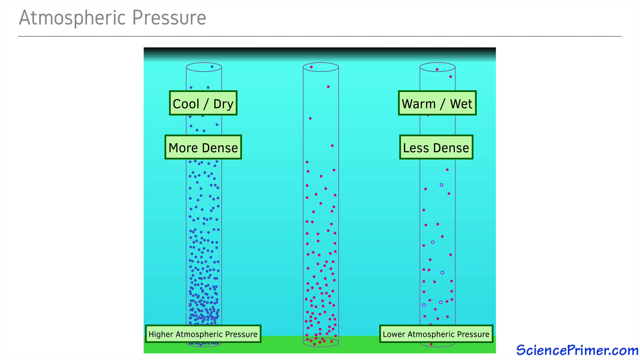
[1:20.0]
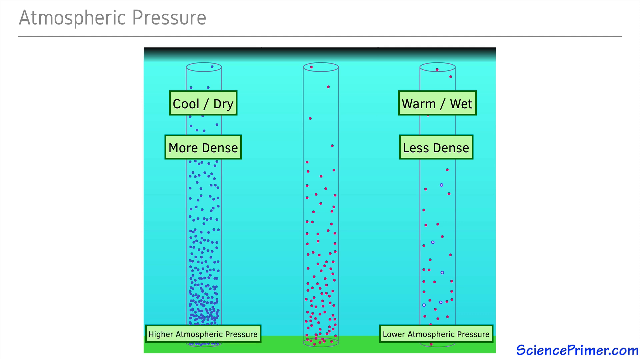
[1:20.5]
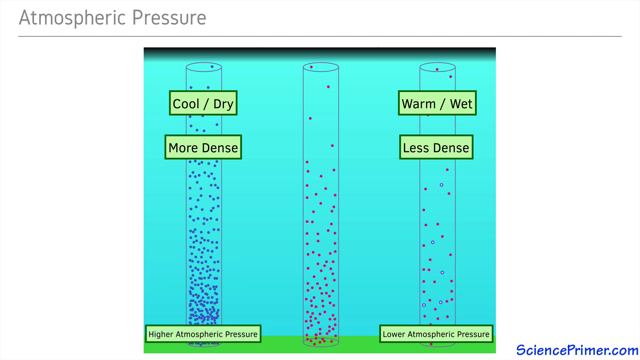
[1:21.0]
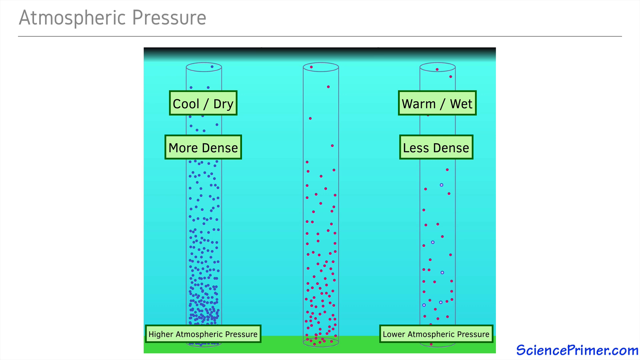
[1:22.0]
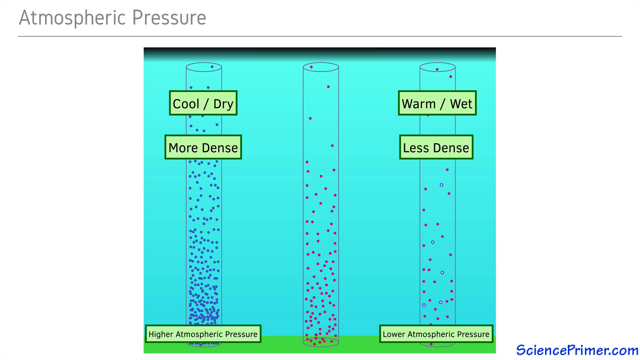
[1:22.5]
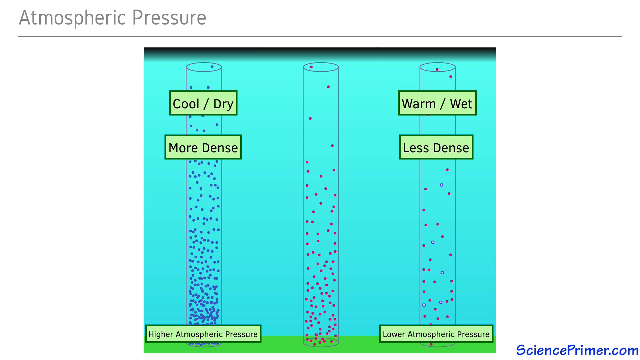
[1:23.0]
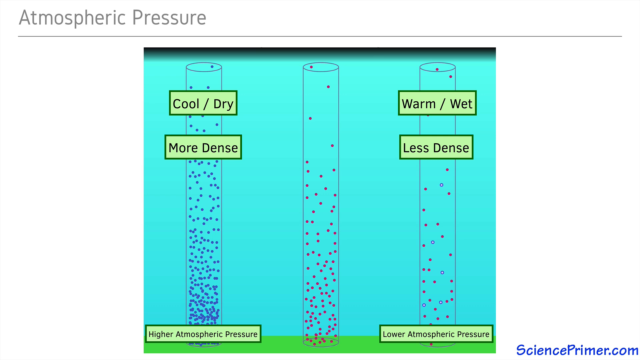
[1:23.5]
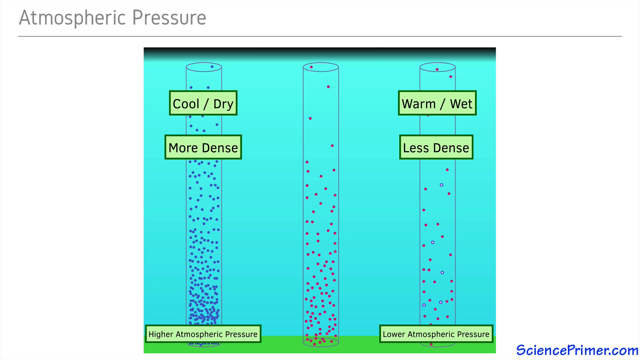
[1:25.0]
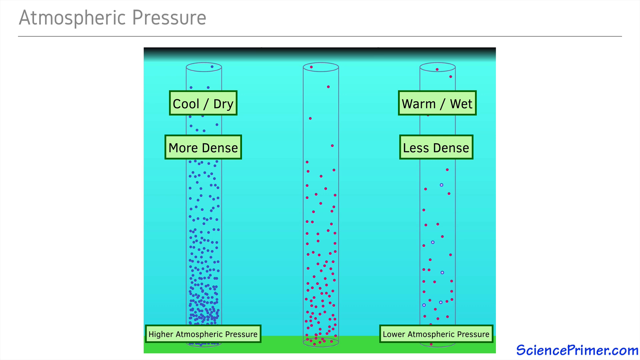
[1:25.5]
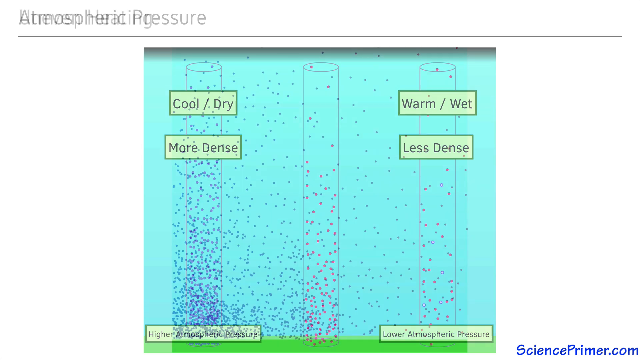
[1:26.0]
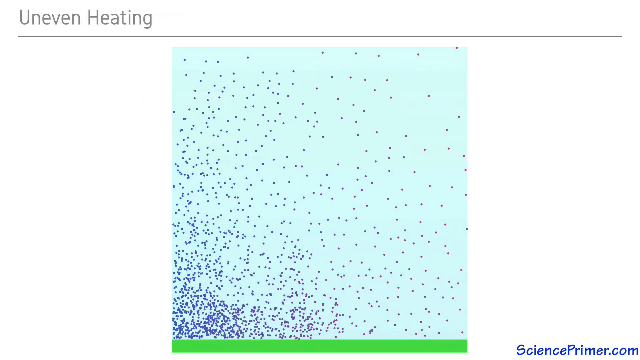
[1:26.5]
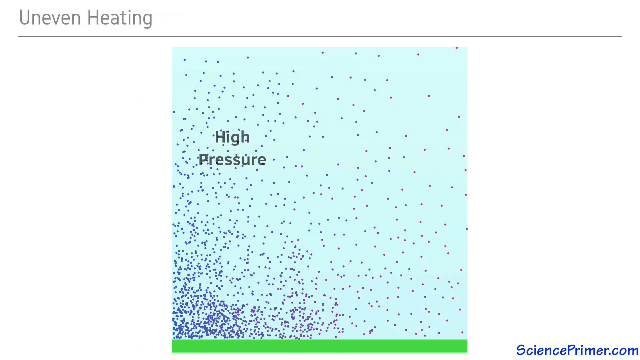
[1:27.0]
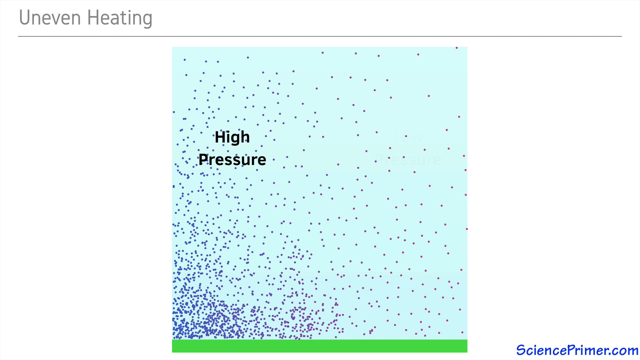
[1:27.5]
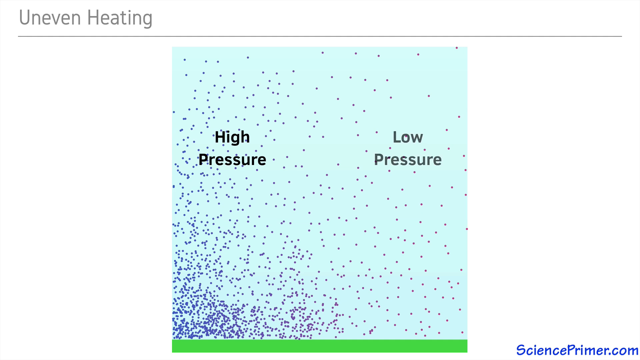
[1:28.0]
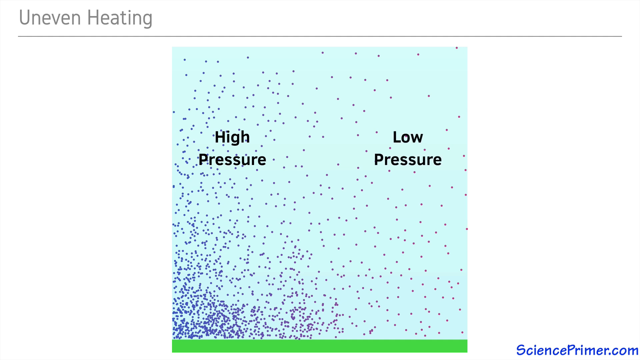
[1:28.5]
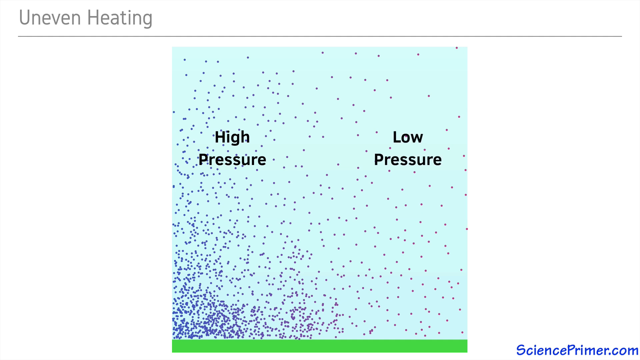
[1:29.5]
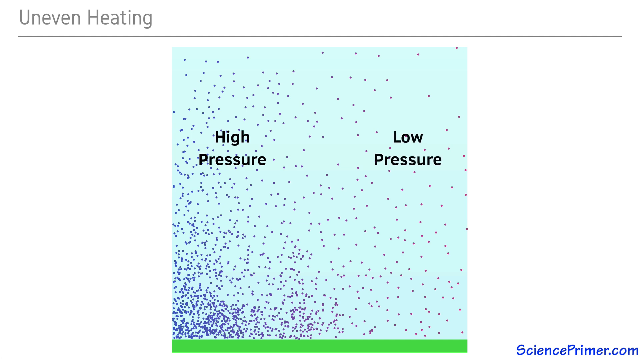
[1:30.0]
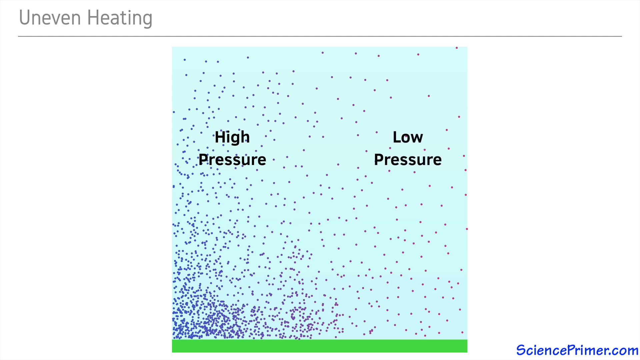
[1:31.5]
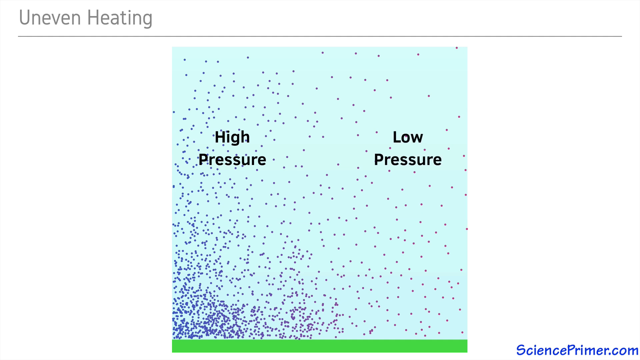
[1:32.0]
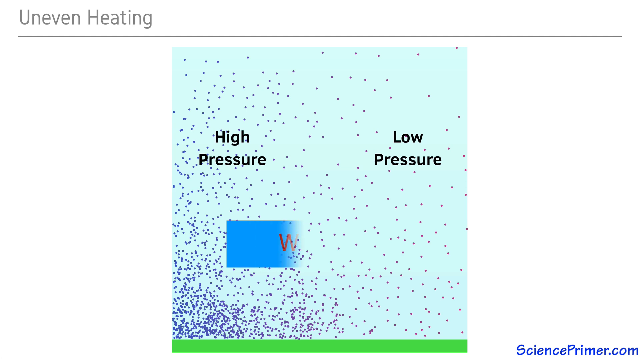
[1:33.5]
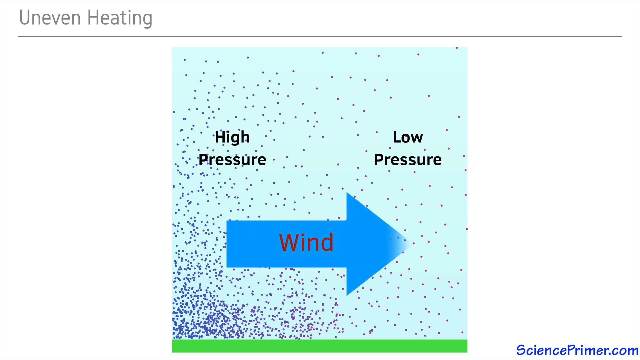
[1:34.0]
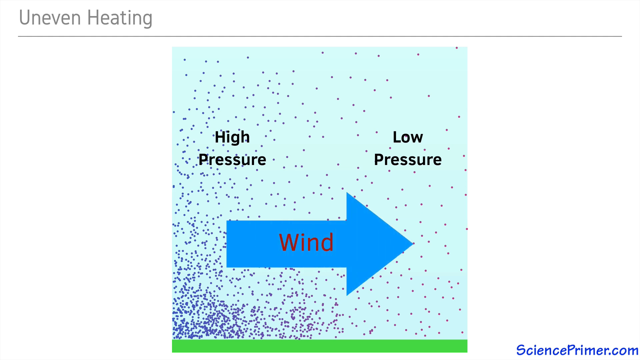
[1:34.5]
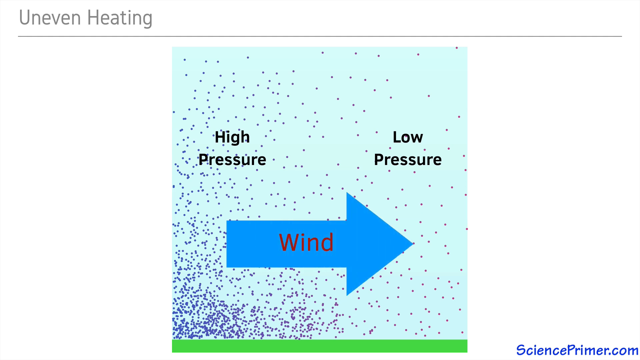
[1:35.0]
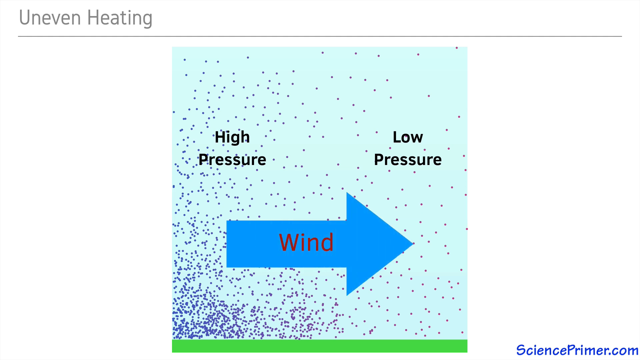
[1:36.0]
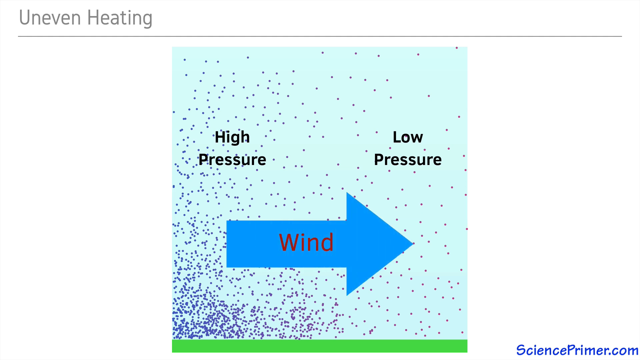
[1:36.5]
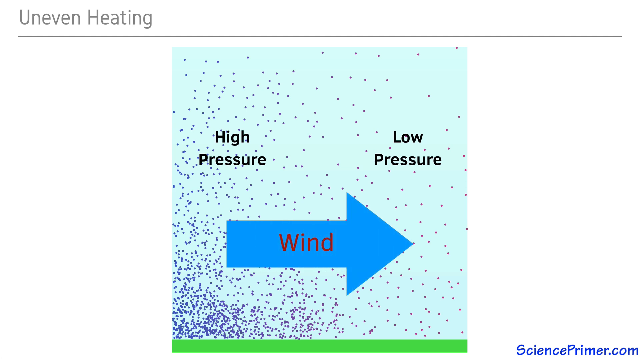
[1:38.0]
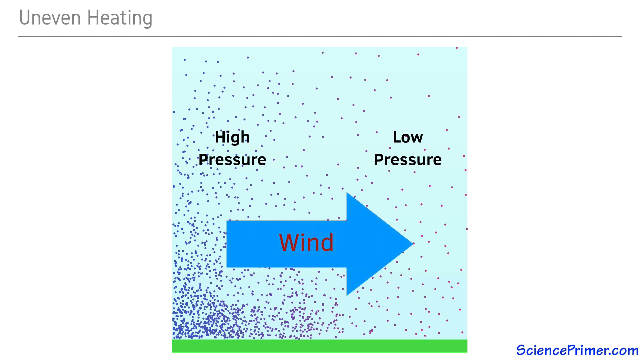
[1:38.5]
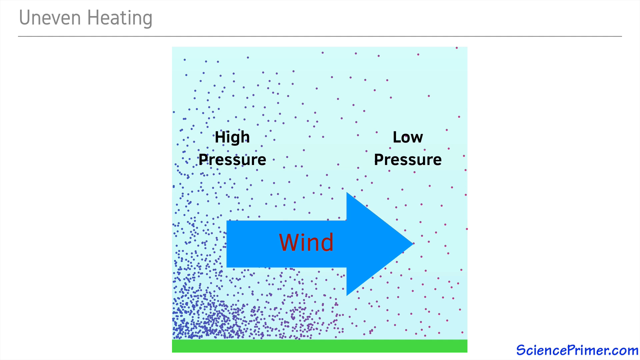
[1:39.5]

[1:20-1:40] The three cylinders disappear and many purple dots appear, with a large cluster in the bottom left corner. The words "high pressure" appear on the left side, then "low pressure" on the right side. The purple dots are inside a very large light blue square in the middle of the screen that takes up most of the screen. Its bottom looks green and represents the ground. A large blue arrow in the middle points to the right, with the word "wind" in its center. In the top left corner is the title "uneven heating."